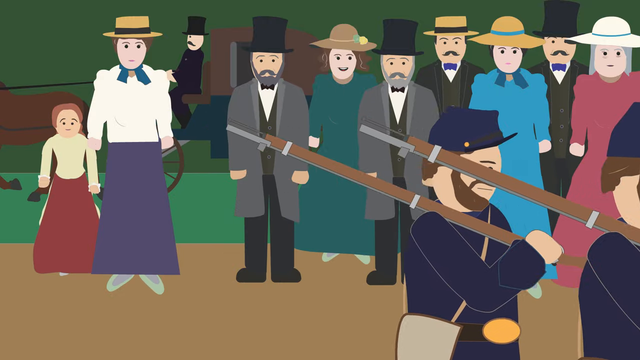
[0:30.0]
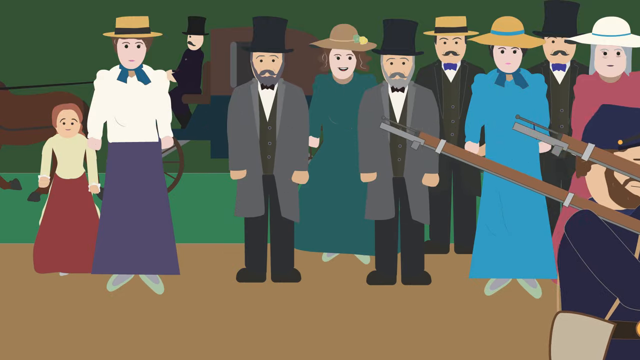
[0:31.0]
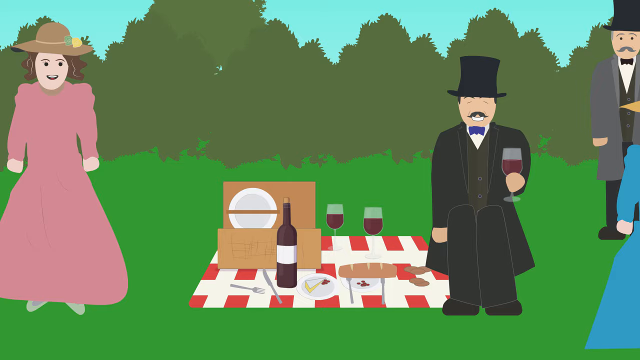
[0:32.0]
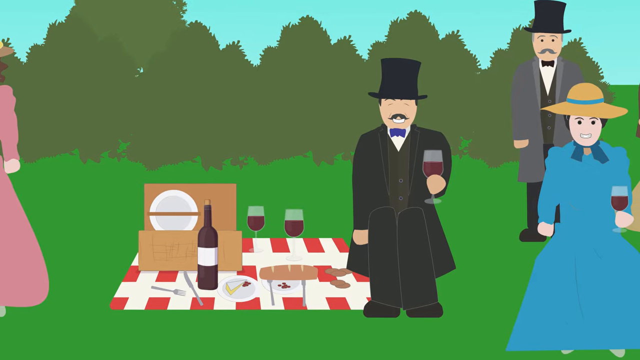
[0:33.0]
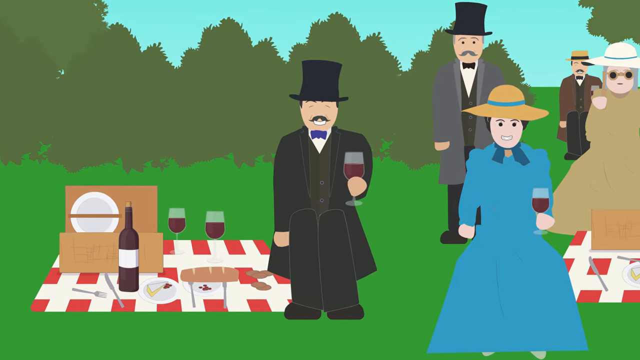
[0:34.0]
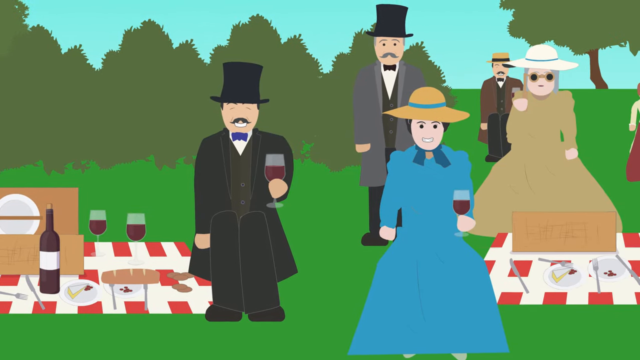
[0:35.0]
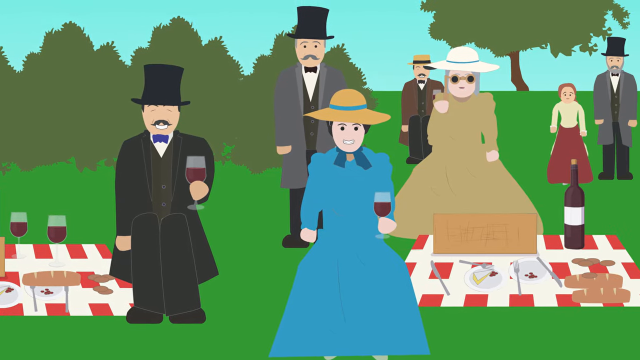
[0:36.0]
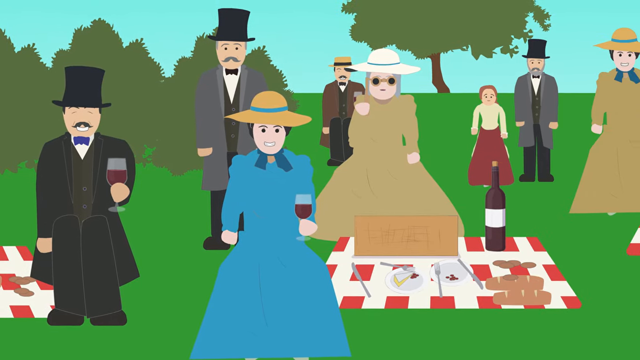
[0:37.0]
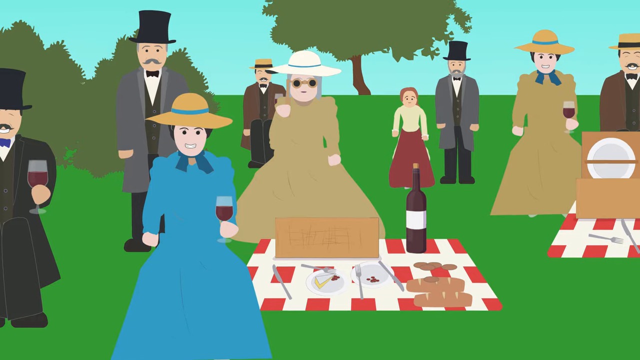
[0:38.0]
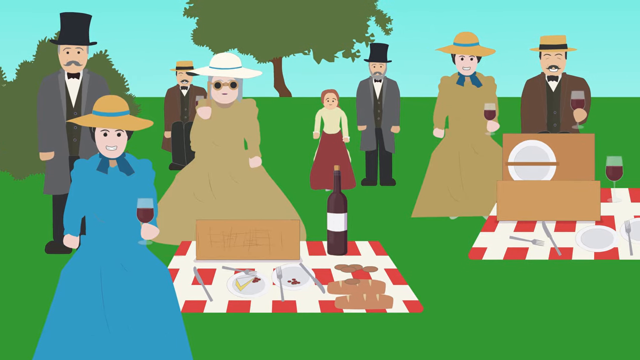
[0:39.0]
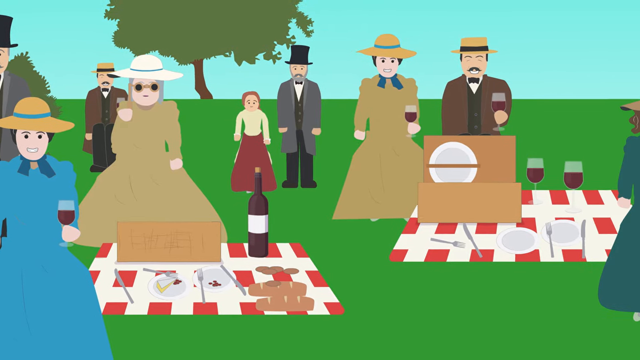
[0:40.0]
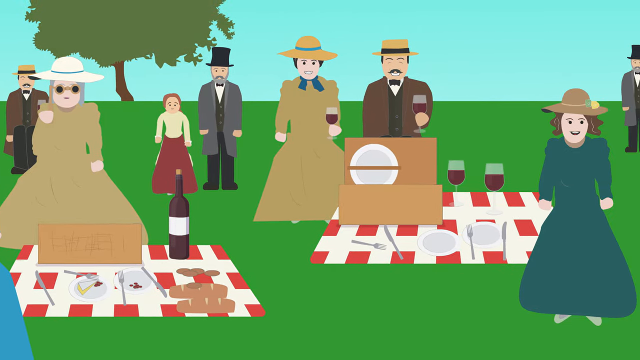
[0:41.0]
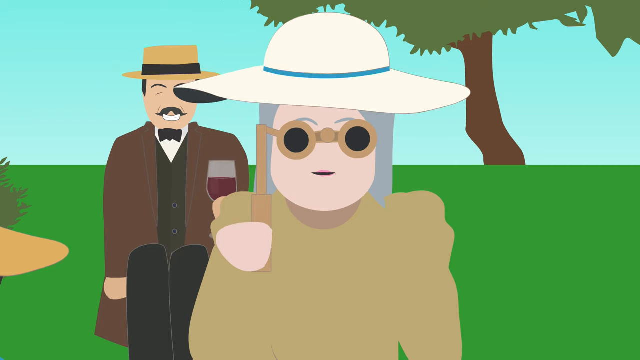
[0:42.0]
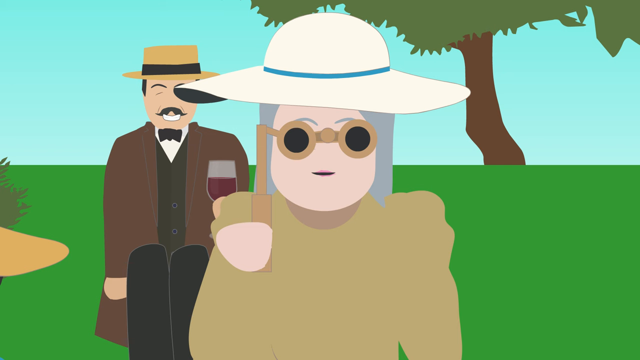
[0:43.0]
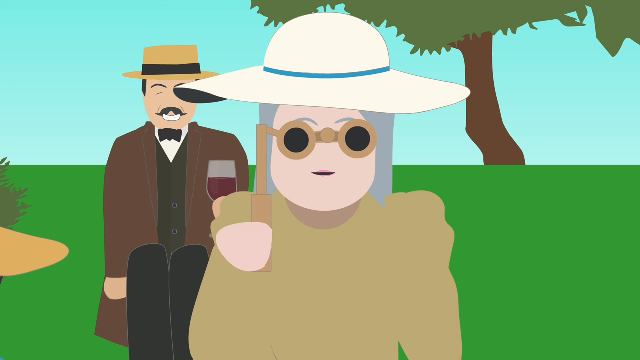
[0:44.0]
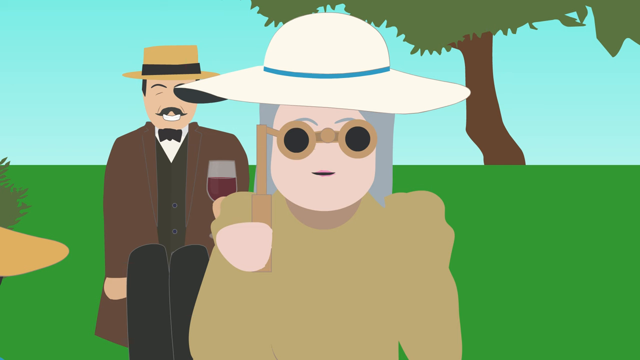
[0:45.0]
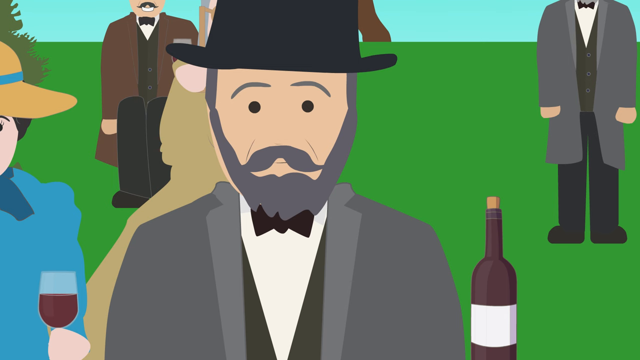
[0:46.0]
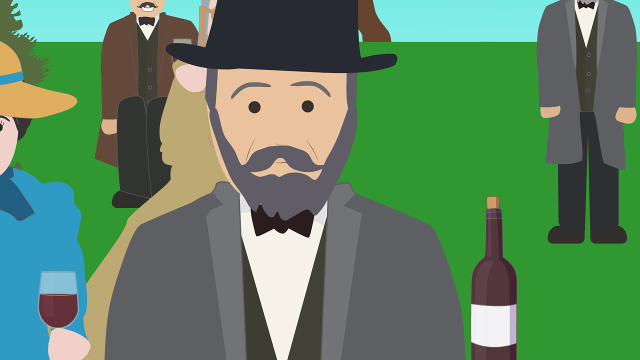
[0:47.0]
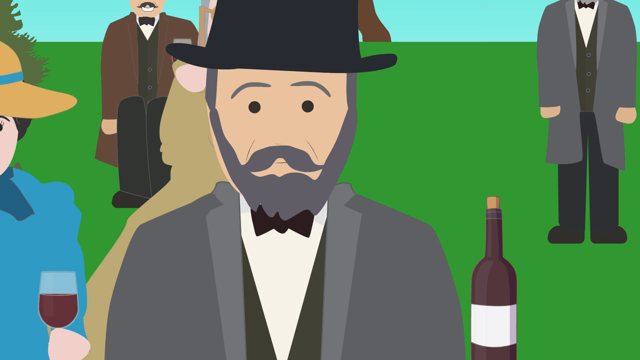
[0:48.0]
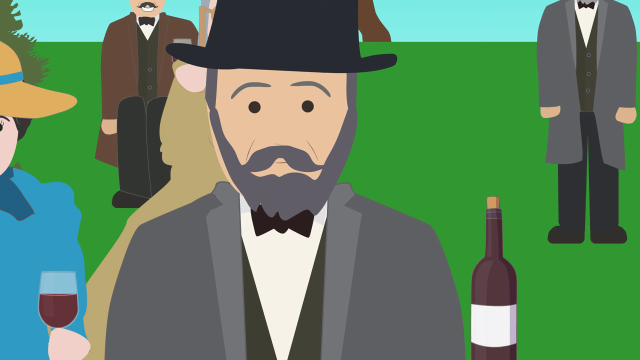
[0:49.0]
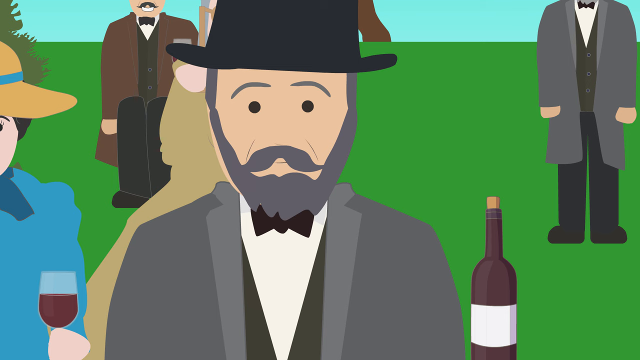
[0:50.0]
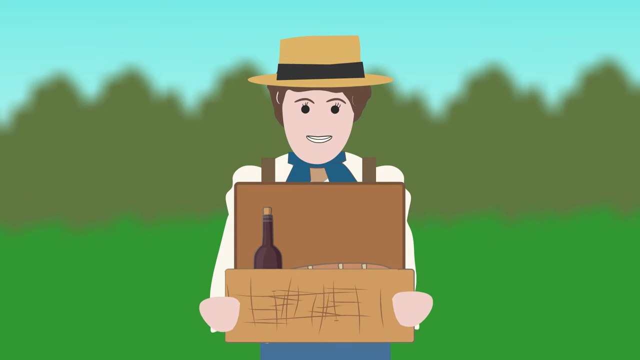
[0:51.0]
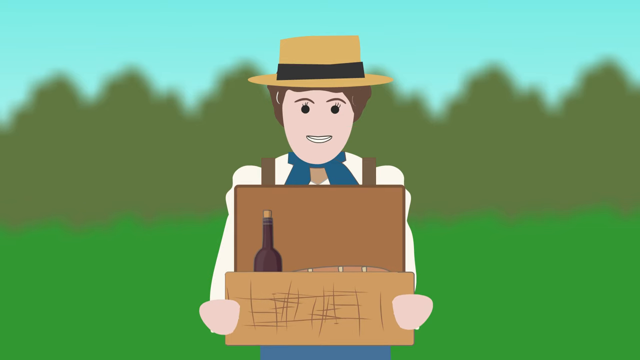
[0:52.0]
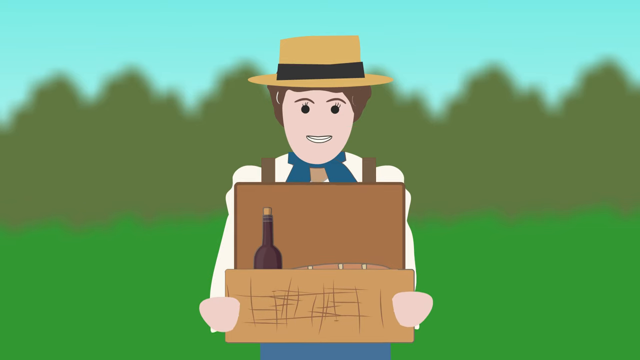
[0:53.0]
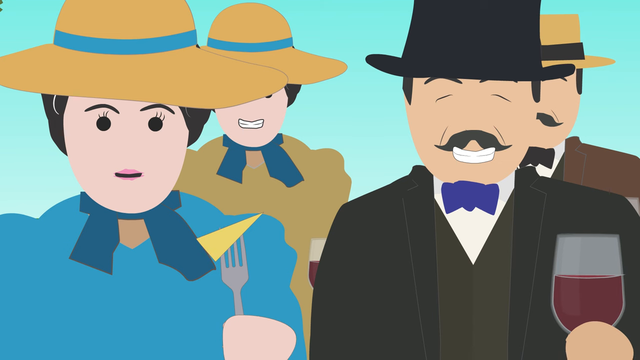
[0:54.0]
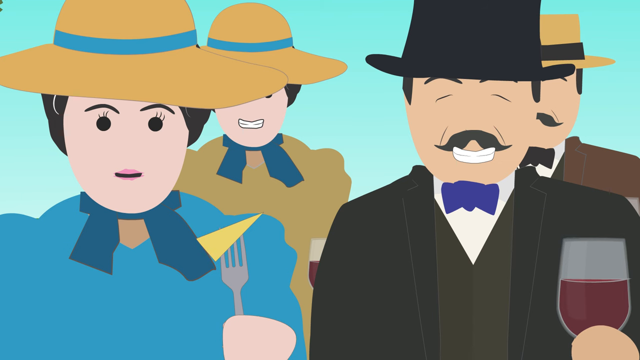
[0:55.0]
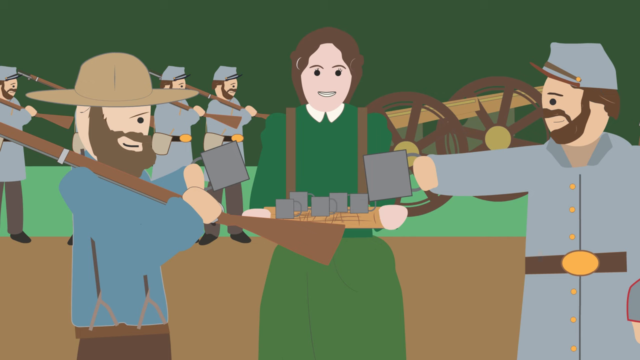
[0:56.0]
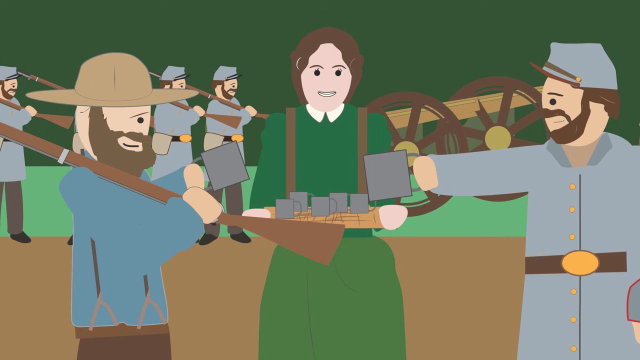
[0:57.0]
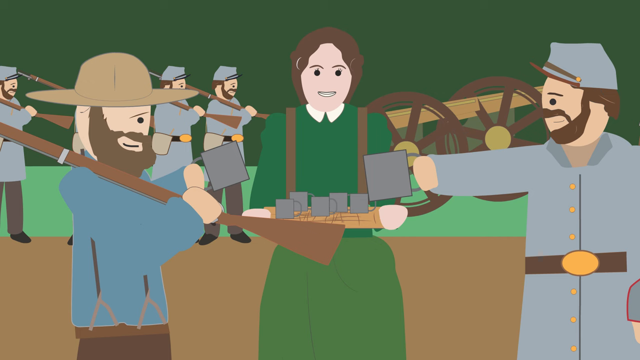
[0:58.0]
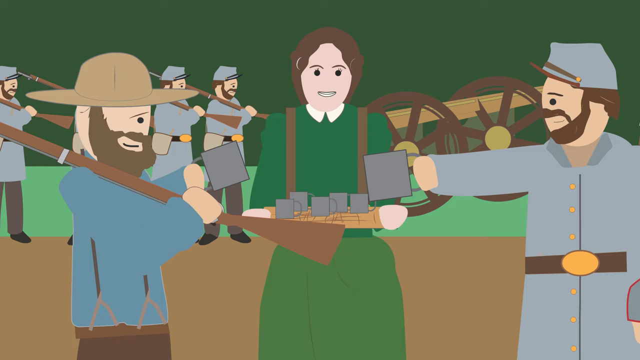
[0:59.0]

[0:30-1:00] Civil War soldiers march down a street while townsfolk watch them go by. The next scene shows townsfolk sitting in a park area having a picnic: several different people, couples and families, each with picnic blankets spread out in front of them. While picnicking, they hold small handheld binoculars up to their eyes, apparently watching the battle in the fields and valleys in the distance below. One of the people holds a woven basket with a bottle of wine in it. After that, the person appears to have poured the wine into glasses and carried them down to the soldiers who are fighting, and the townswoman shares some of the wine with the soldiers on the battlefield.